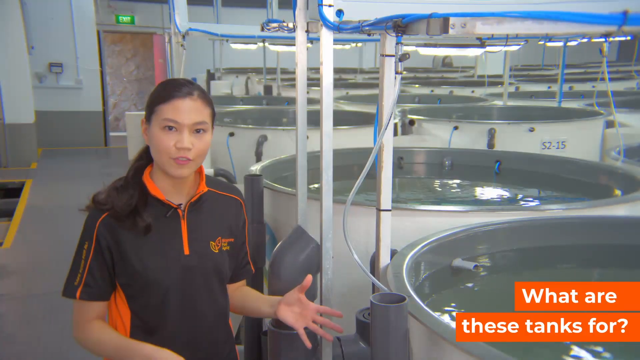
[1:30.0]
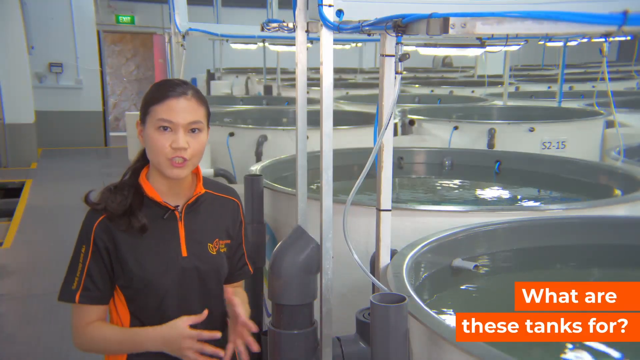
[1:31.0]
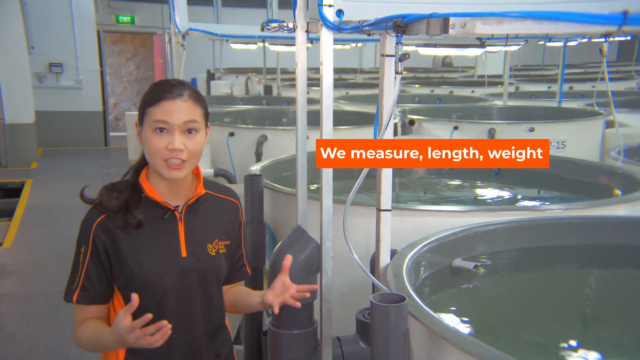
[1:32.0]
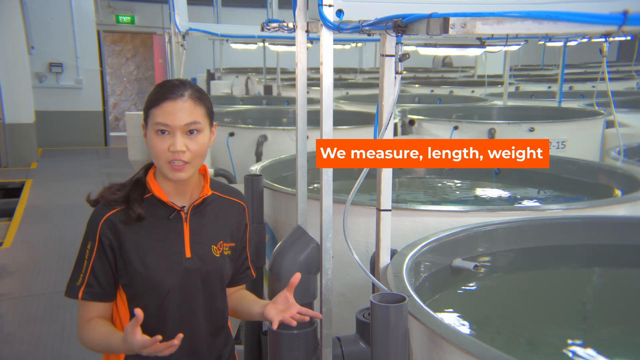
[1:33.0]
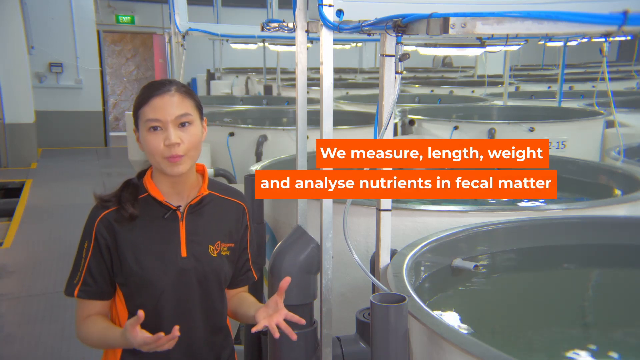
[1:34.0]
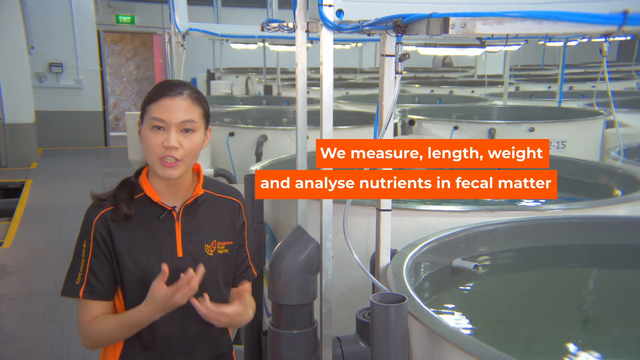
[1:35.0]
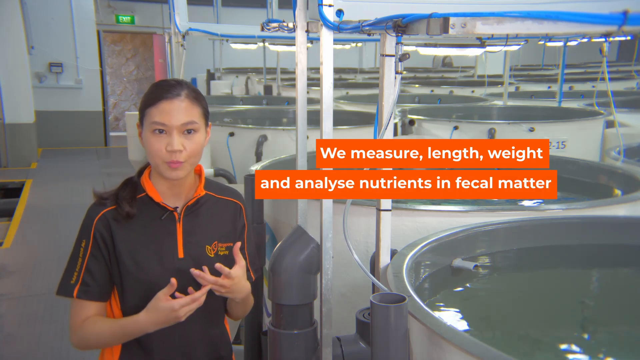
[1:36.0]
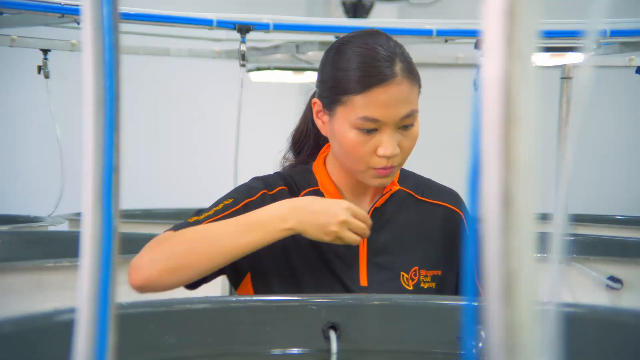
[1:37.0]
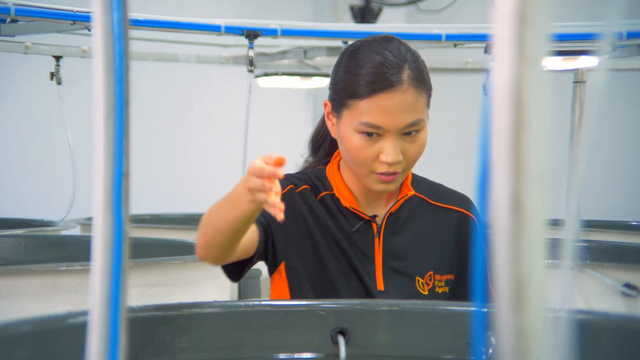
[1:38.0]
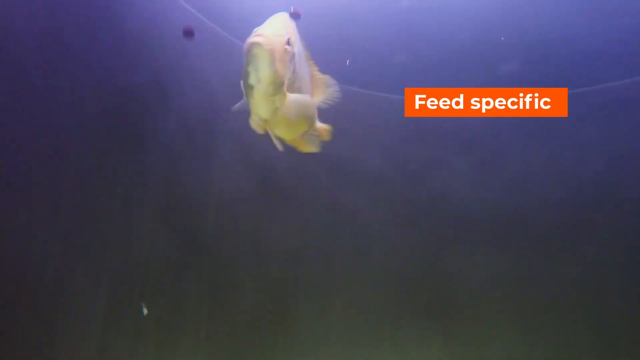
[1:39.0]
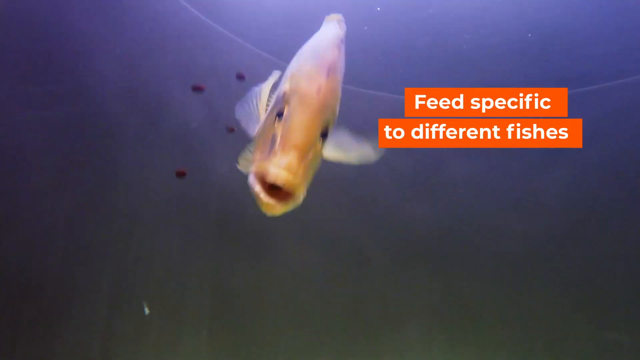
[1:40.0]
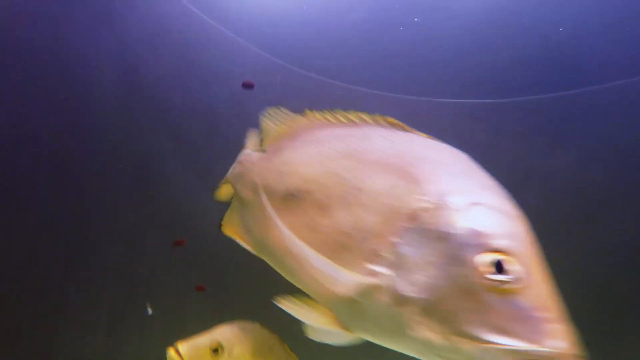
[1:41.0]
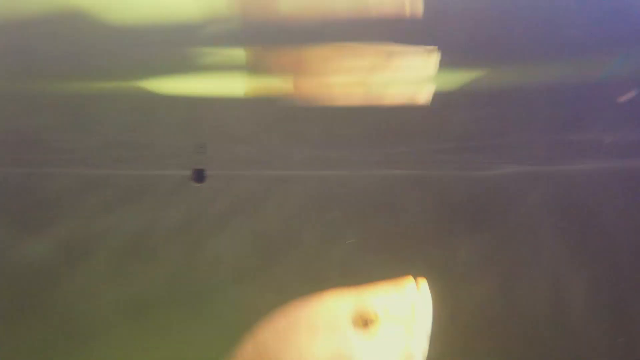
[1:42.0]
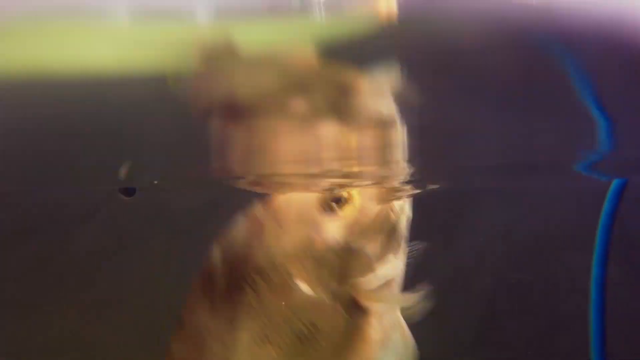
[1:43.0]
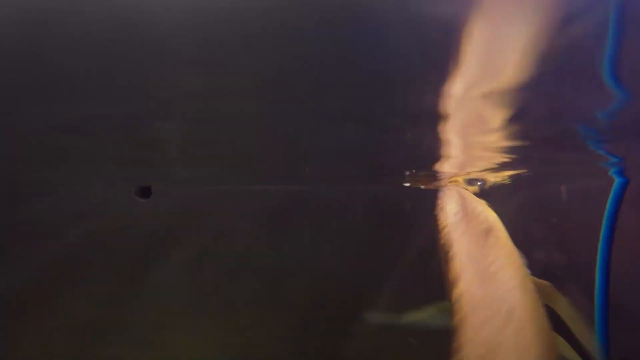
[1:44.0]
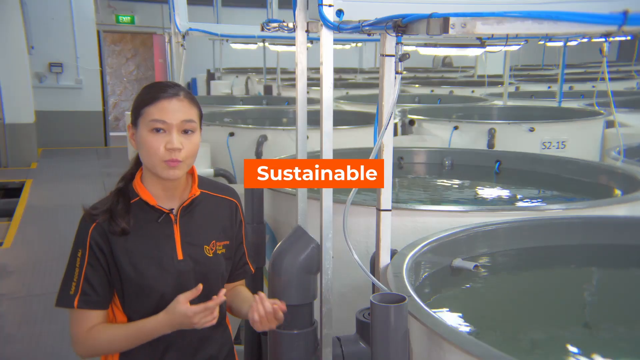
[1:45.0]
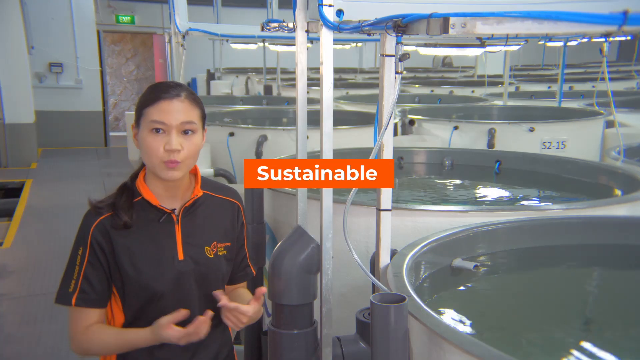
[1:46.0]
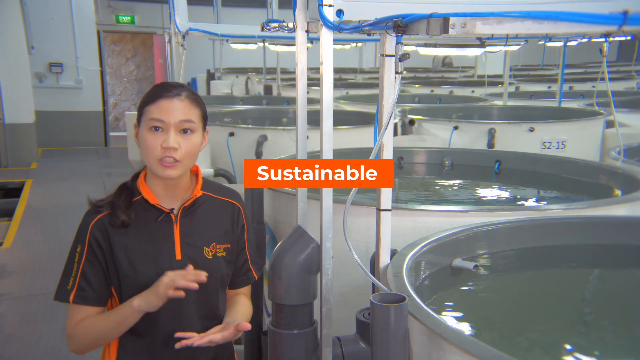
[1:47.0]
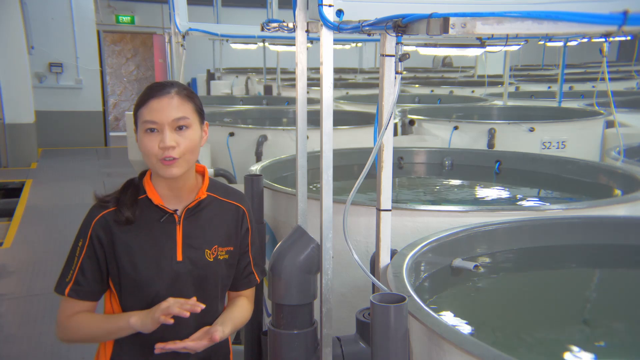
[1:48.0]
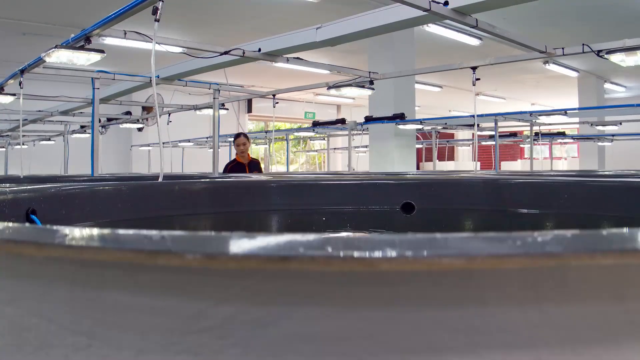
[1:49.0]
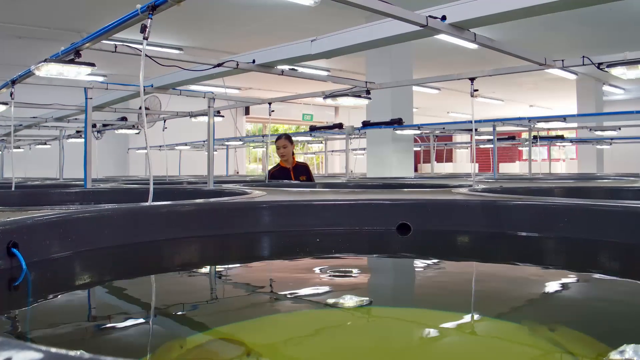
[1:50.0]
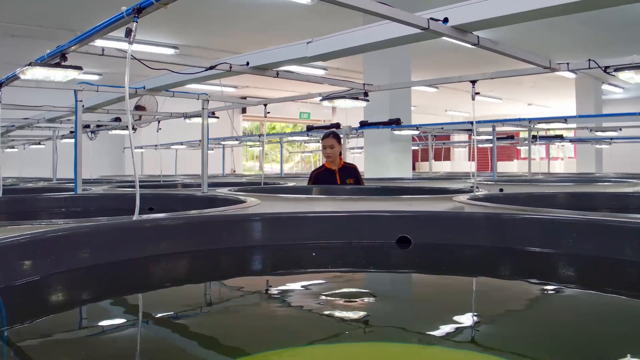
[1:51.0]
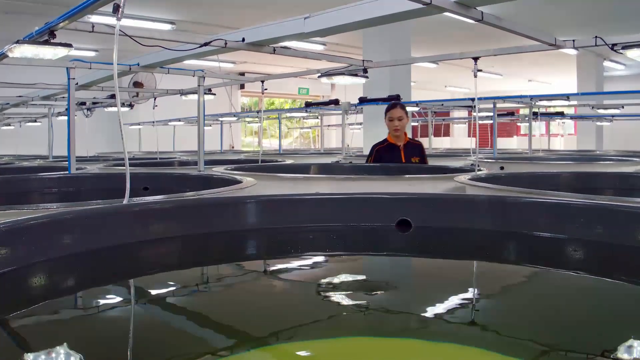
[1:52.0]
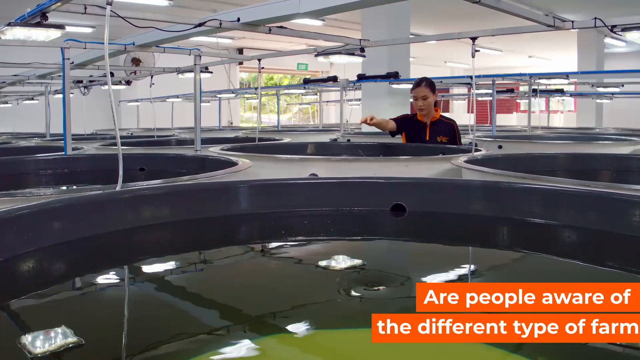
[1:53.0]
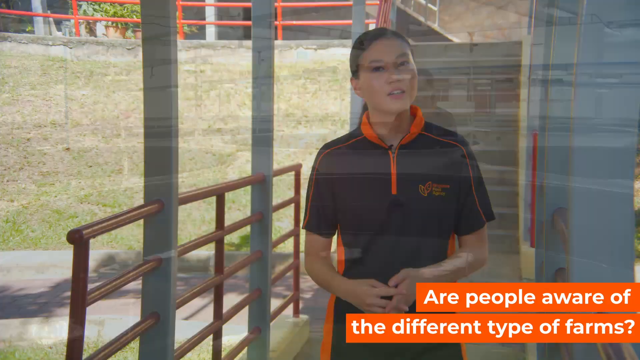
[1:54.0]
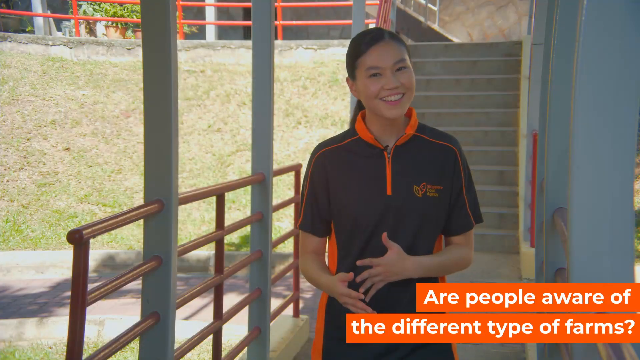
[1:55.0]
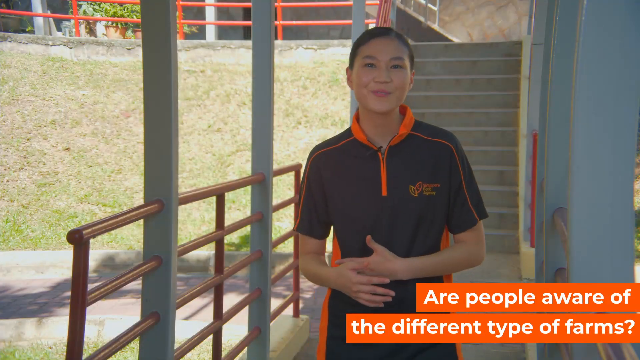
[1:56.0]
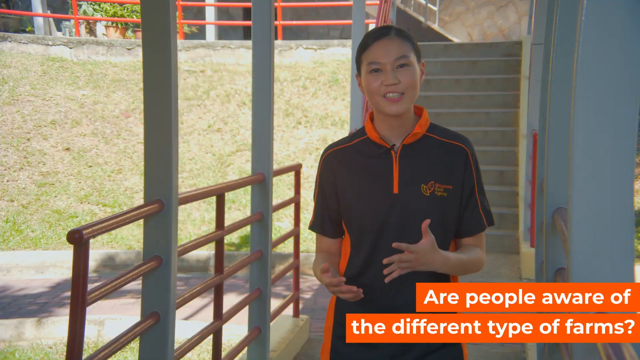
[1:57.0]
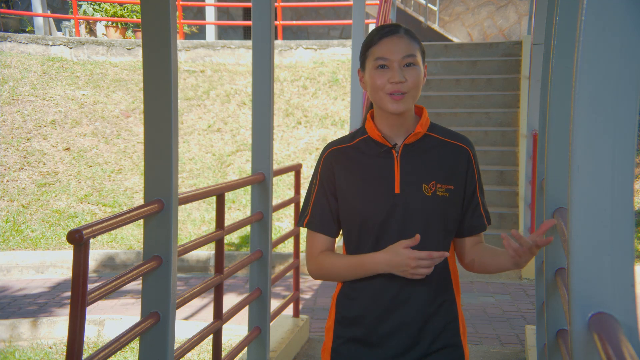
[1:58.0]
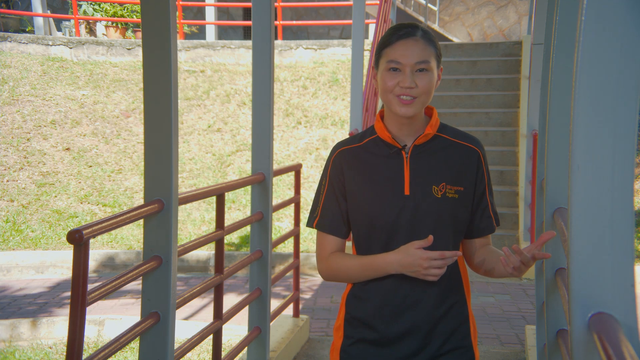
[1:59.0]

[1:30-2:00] With all her protective gear off, the woman speaks to her audience while standing next to large pools of water. There are many large pools in the room, each white on the outside, with pumps leading into them and an electrical cord extending from them. The water appears to be bubbling or in constant motion. She speaks and gestures with her hands for emphasis, and the words "We measure, length, weight" appear on screen. There appear to be fish in the pools. She throws some food to the fish, which eagerly come to the top of the water and begin to eat. She continues to walk around the room adding fish food to other pools containing fish, smiling, feeding the fish and observing their behavior.